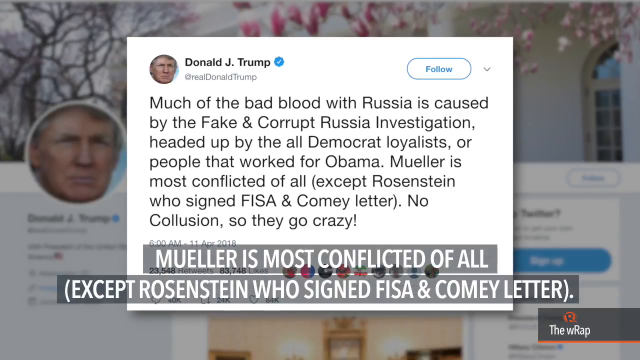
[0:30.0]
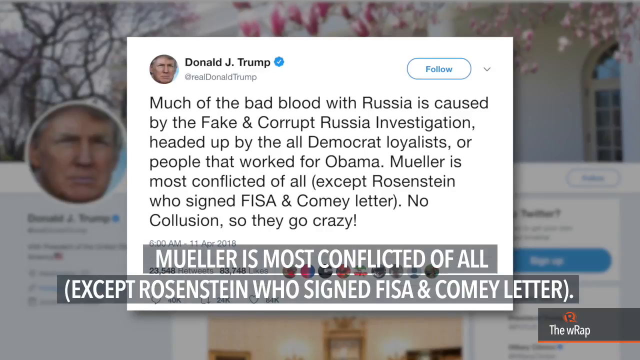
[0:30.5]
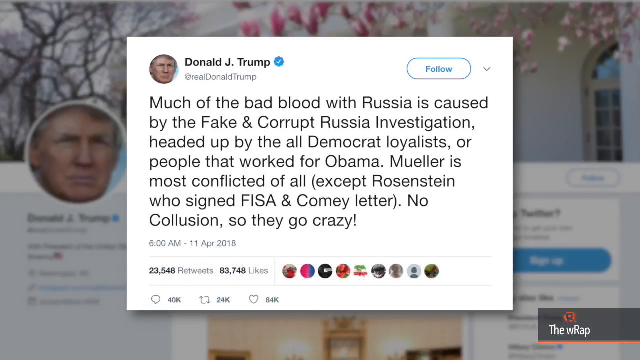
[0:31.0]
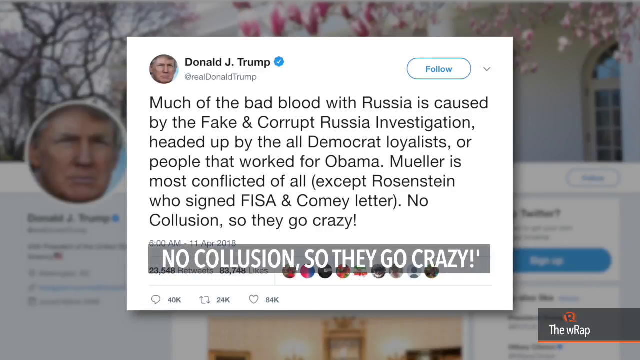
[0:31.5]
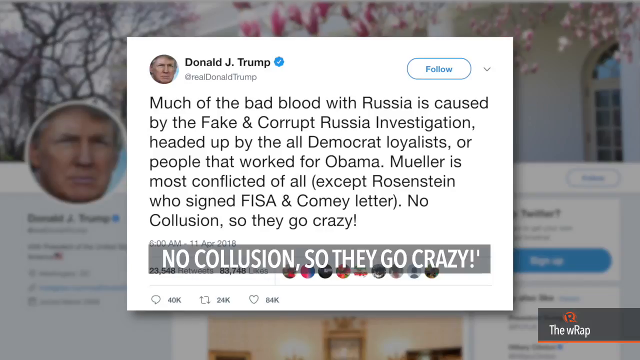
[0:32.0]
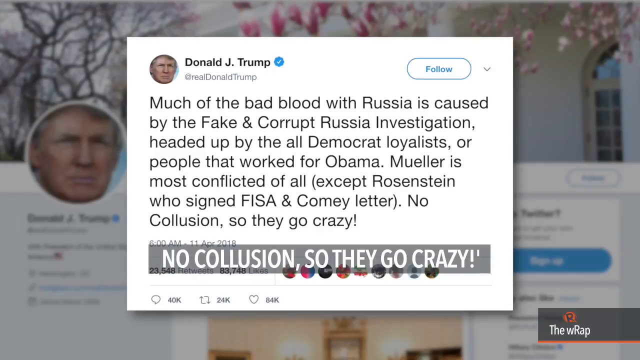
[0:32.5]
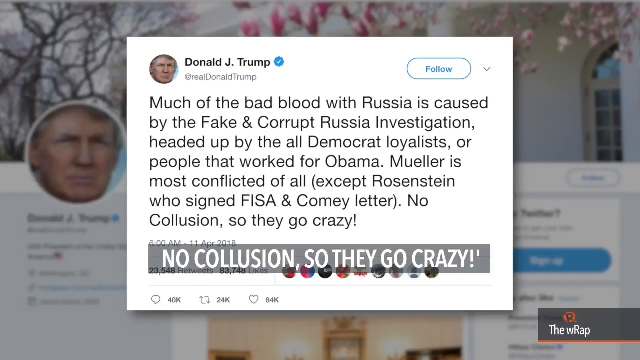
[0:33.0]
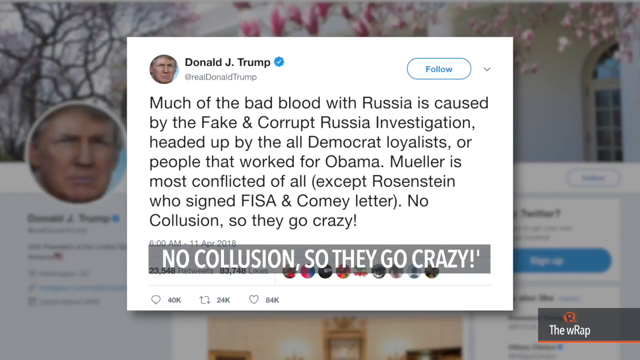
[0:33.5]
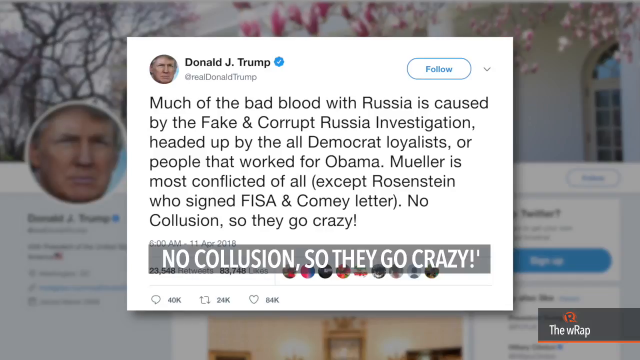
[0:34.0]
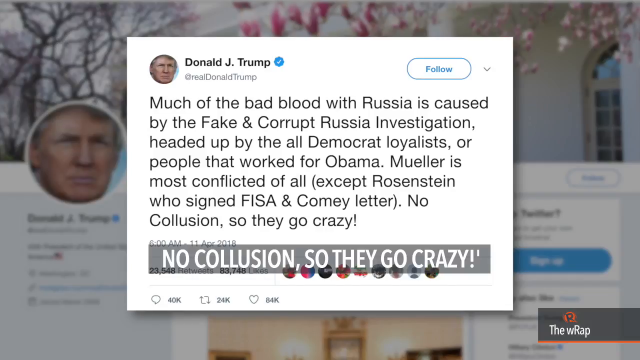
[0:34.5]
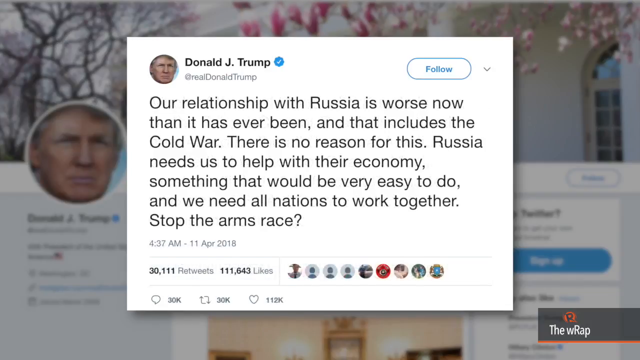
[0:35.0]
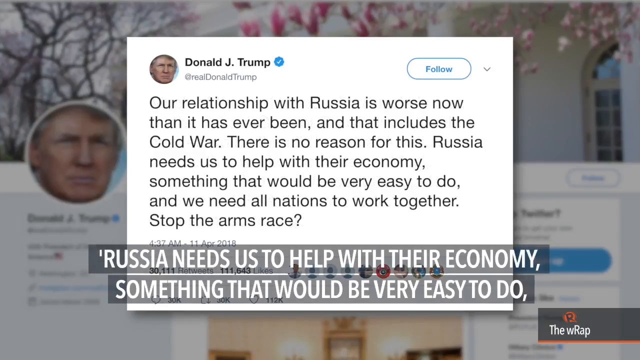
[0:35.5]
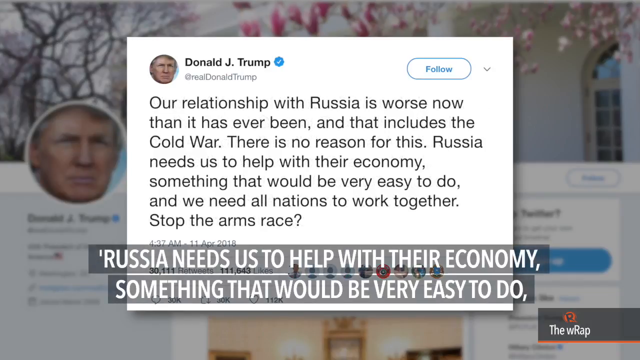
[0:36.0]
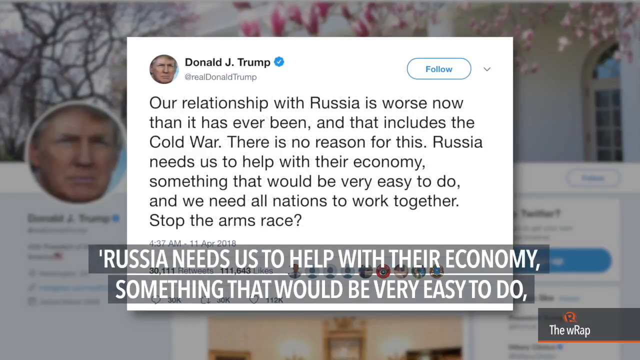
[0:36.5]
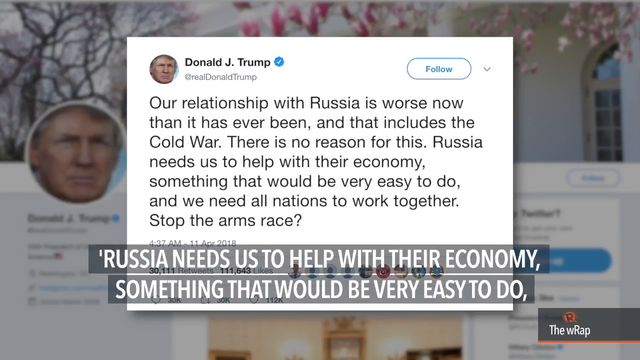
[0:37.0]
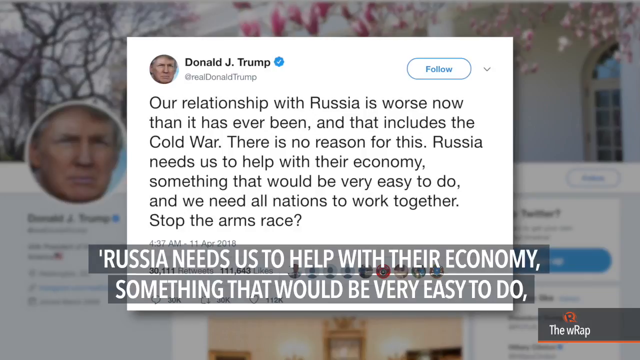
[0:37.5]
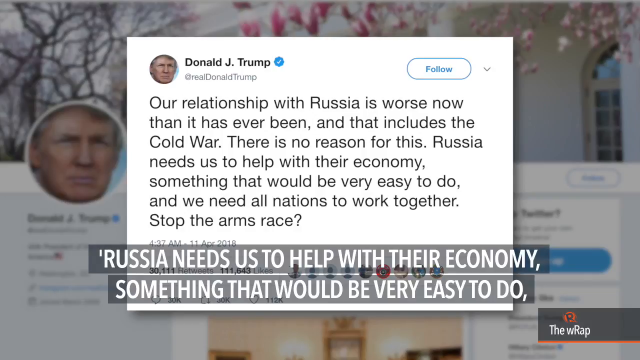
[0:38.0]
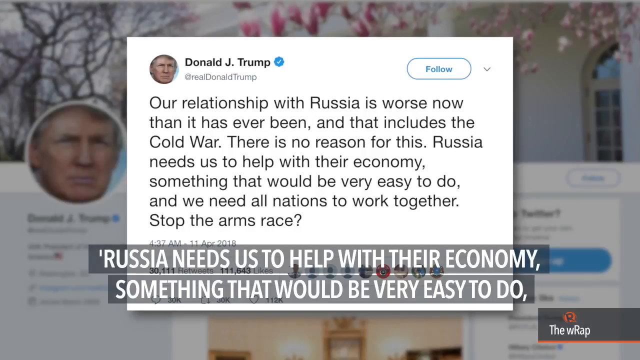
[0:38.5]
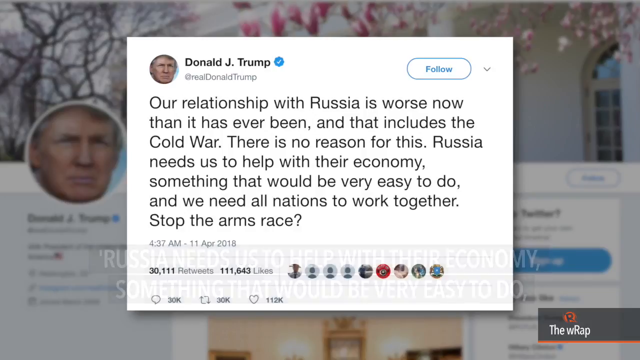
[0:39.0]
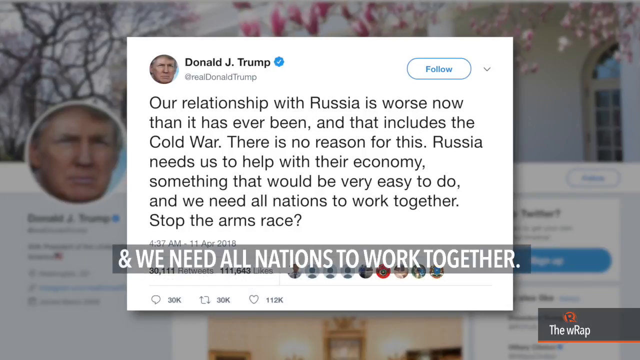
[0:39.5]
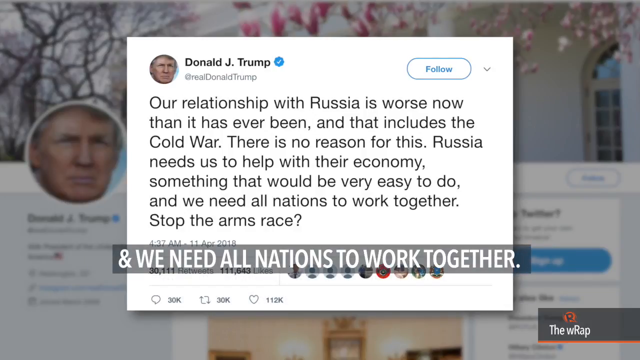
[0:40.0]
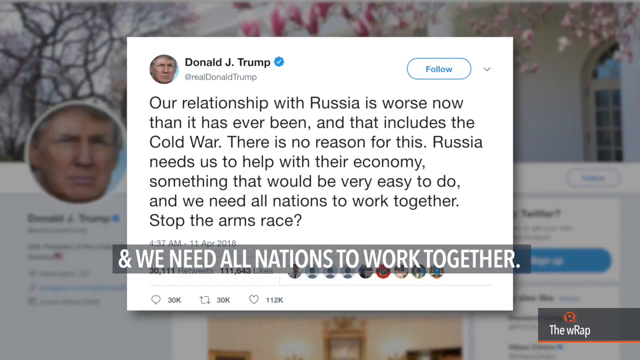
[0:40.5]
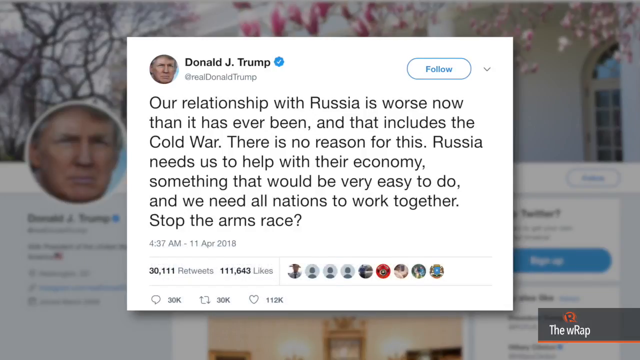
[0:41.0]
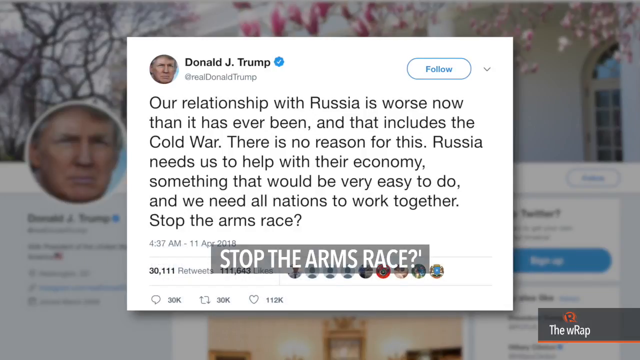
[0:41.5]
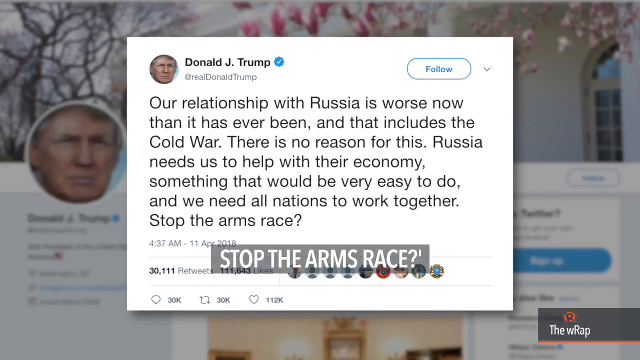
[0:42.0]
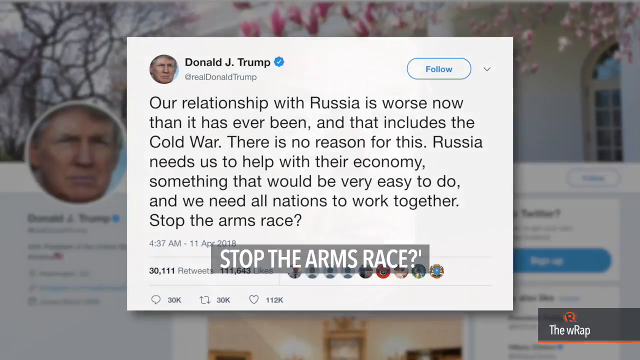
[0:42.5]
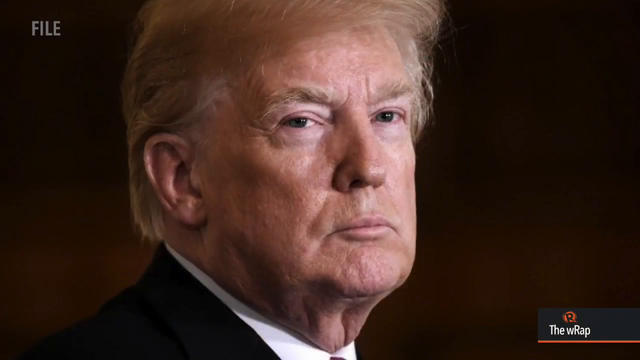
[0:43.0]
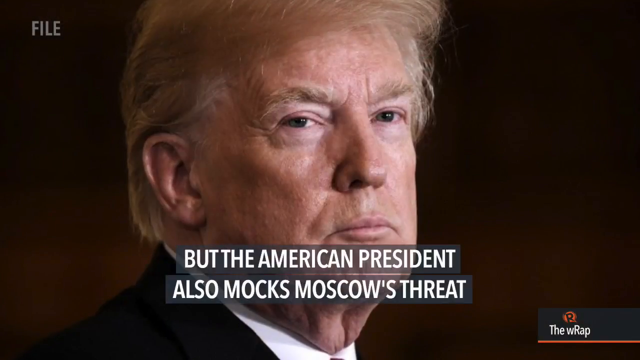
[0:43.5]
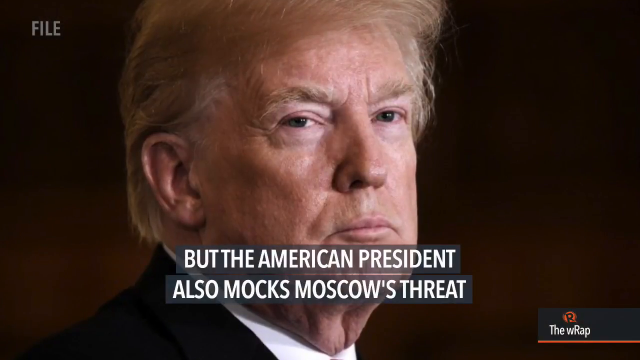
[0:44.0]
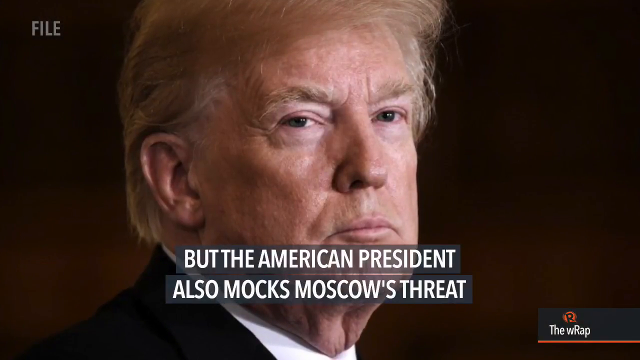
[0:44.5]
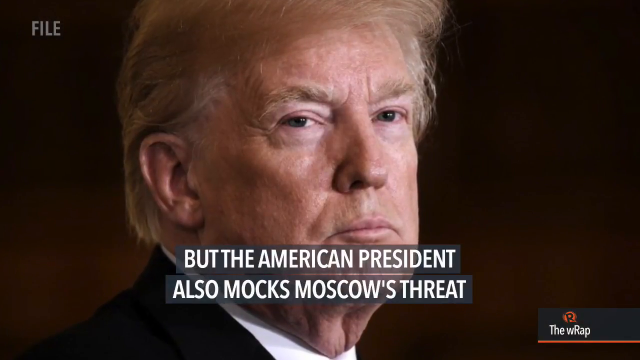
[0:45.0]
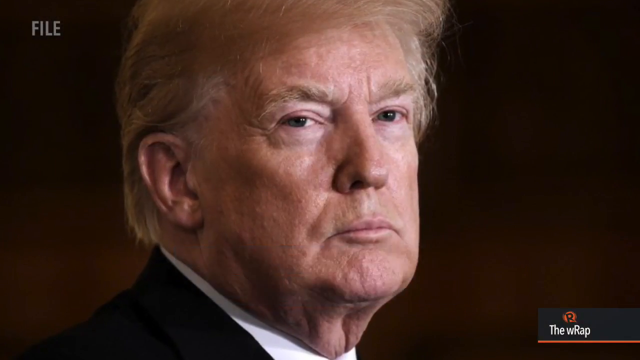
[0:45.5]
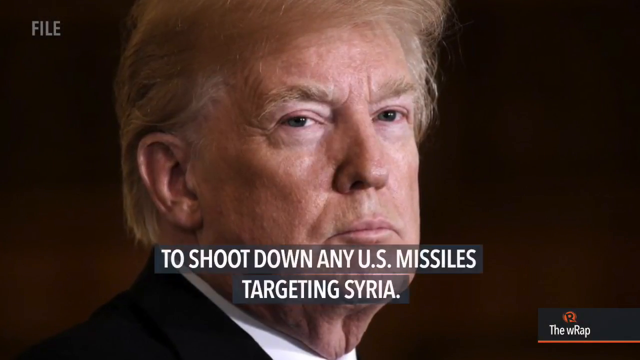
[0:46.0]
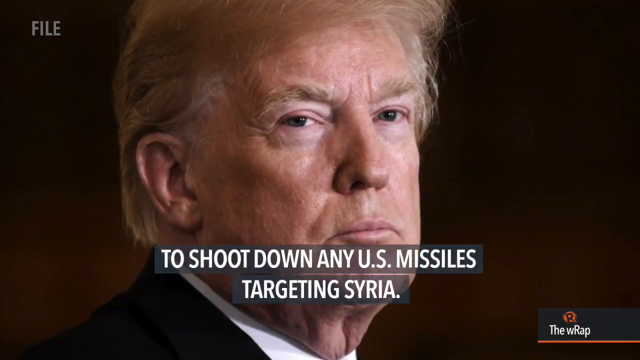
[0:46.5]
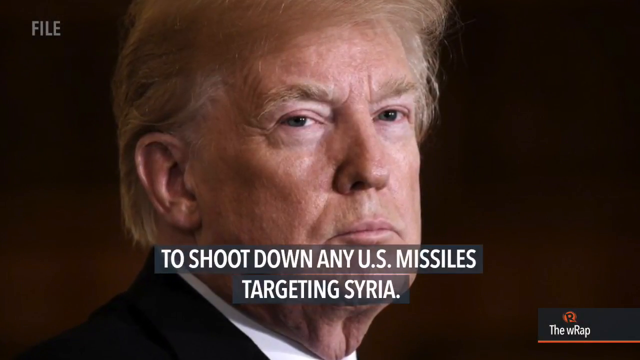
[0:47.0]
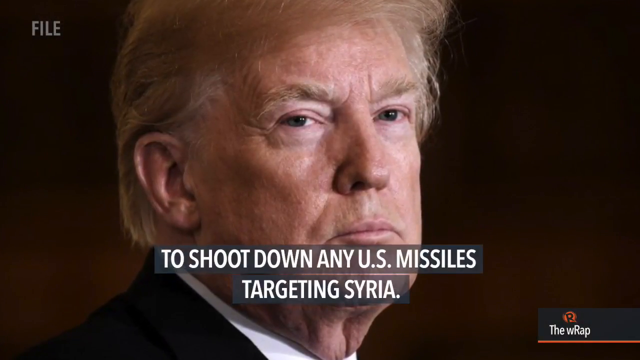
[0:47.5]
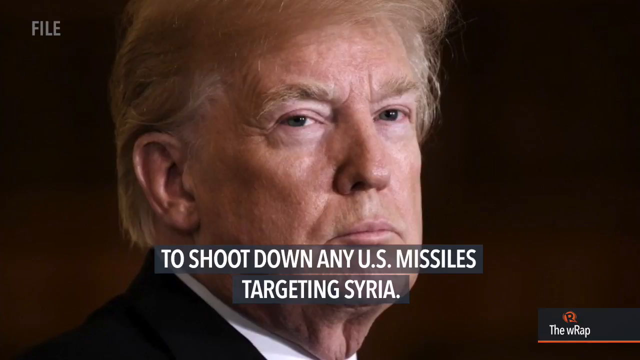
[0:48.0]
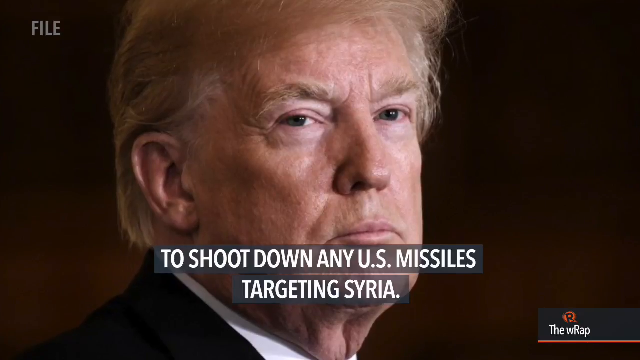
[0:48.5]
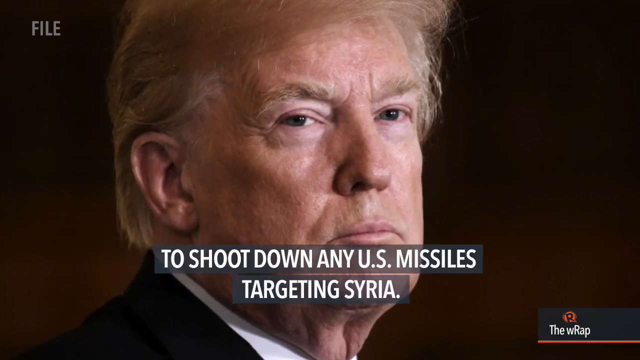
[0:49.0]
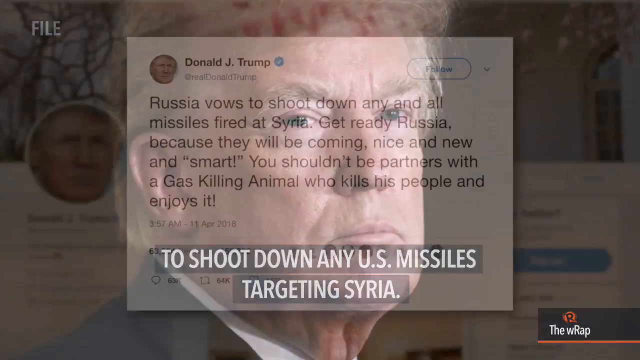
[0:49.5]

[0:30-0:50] The lower part of the screen shows the rest of the words from the tweet, which is still on screen. The video then switches to a different photo of President Trump pouting and pursing his lips, against a brown background that is darker at the top and lighter at the bottom. In the upper left corner white capital letters say "FILE". Trump wears a black jacket, and he seems a little upset, though that could just be his look. White capital text on screen says "BUT THE AMERICAN PRESIDENT ALSO MOCKS MOSCOW'S THREATS". As the camera zooms in slowly on Trump's face, the text changes to "TO SHOOT DOWN ANY US MISSILES TARGETING SYRIA". Then the tweet from the thumbnail is shown; on Trump's Twitter profile, the cover photo has some trees, flowers and a building.